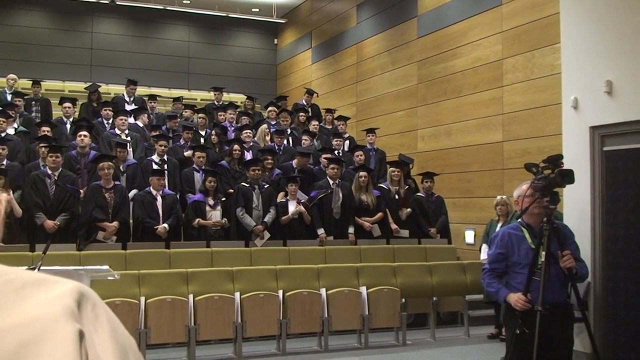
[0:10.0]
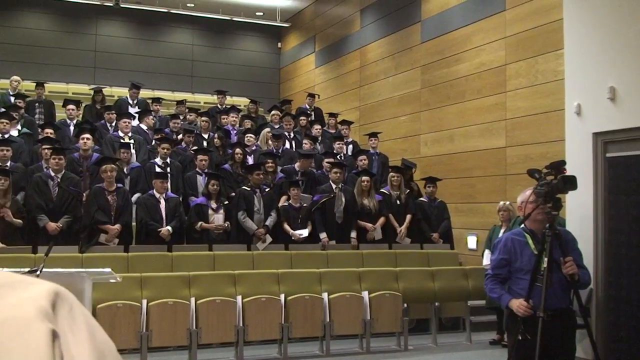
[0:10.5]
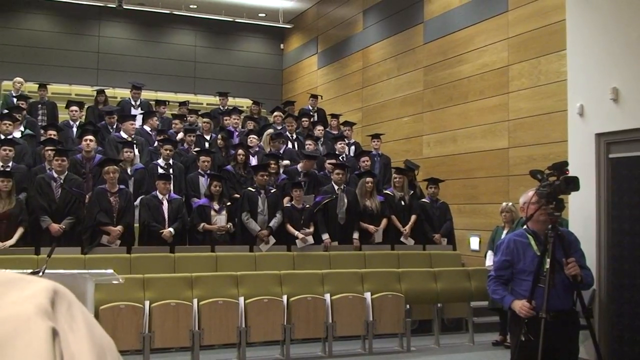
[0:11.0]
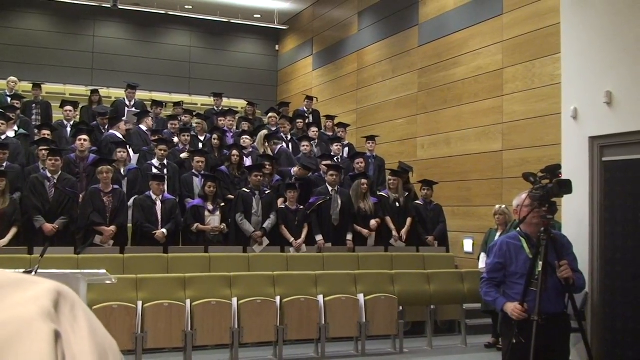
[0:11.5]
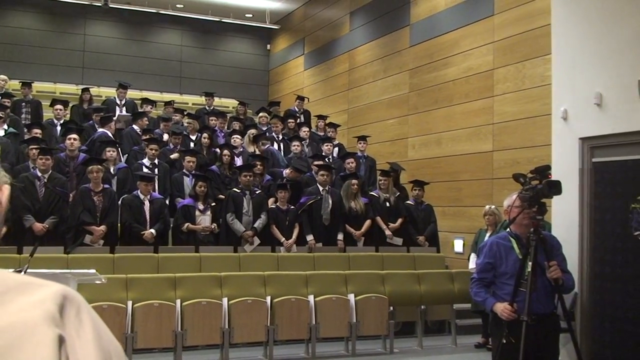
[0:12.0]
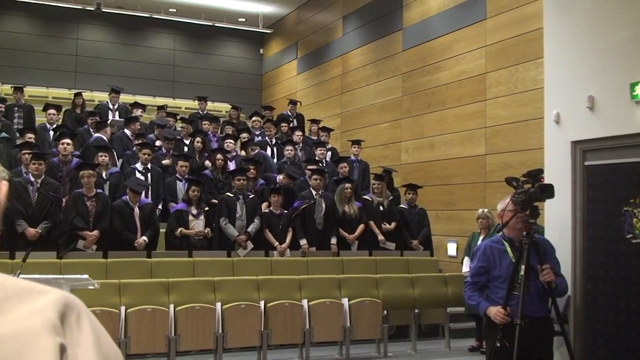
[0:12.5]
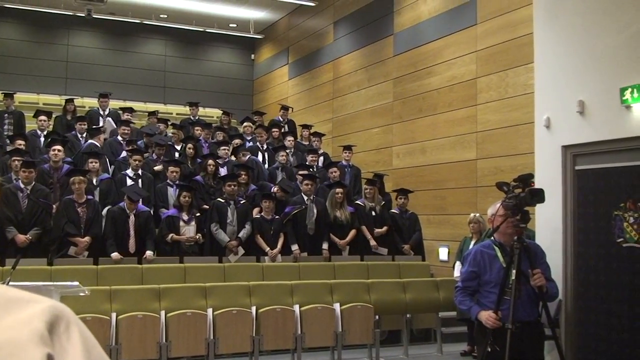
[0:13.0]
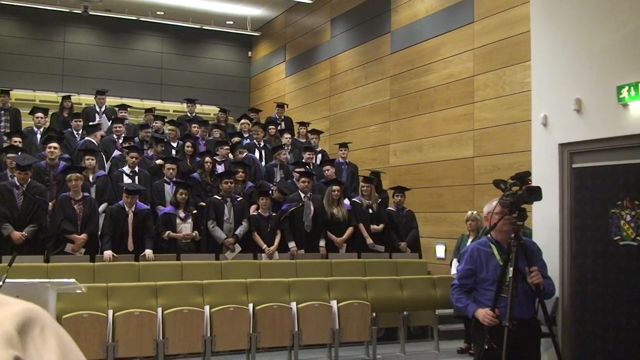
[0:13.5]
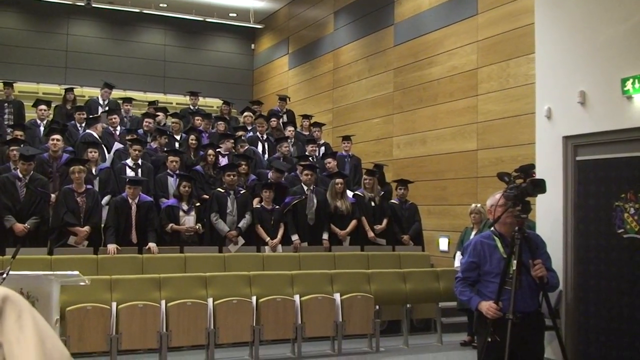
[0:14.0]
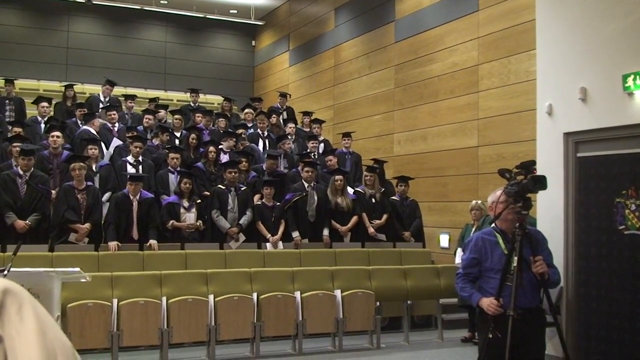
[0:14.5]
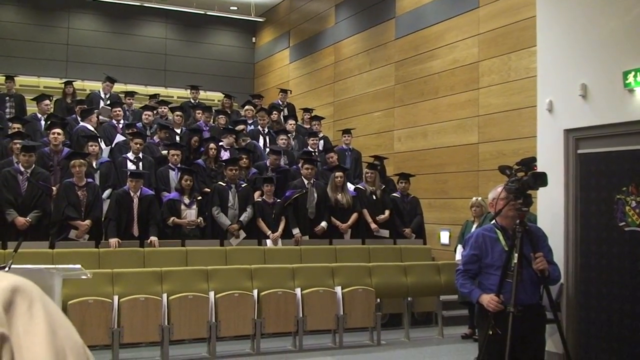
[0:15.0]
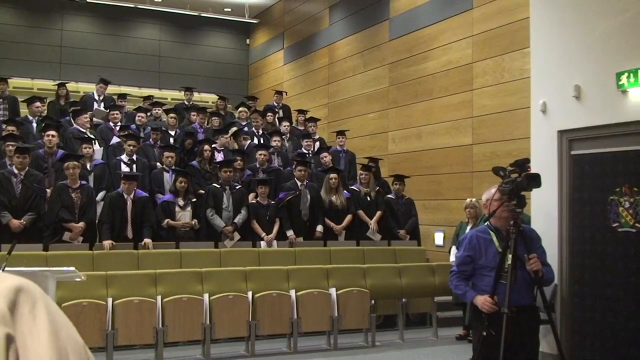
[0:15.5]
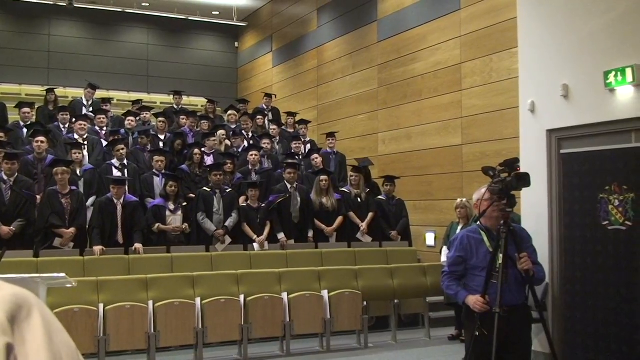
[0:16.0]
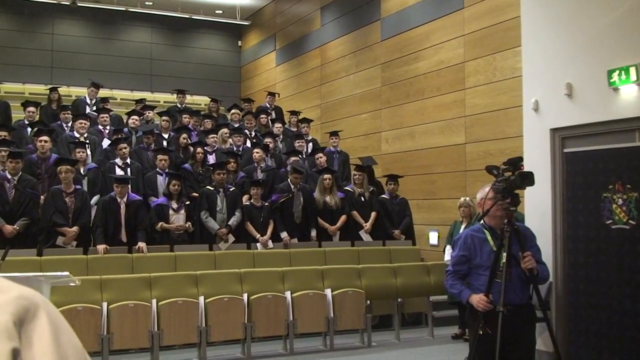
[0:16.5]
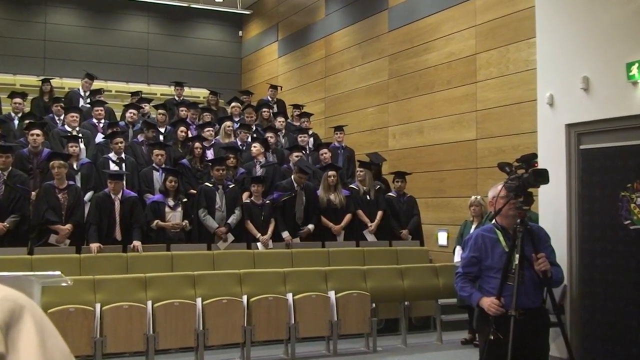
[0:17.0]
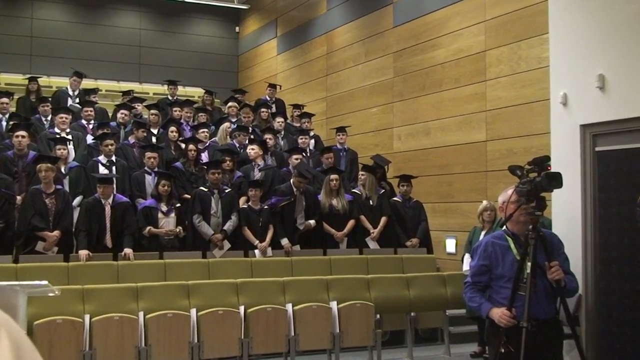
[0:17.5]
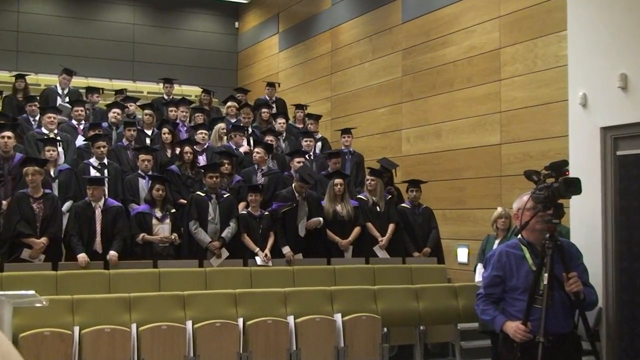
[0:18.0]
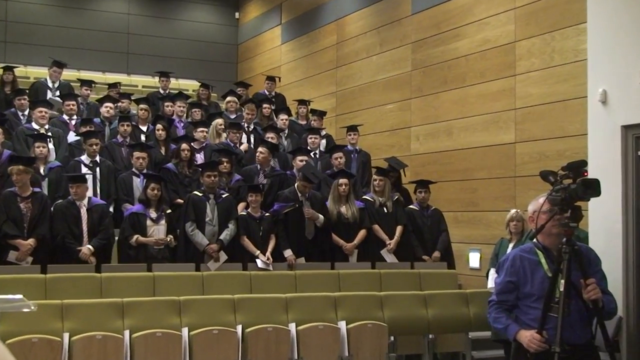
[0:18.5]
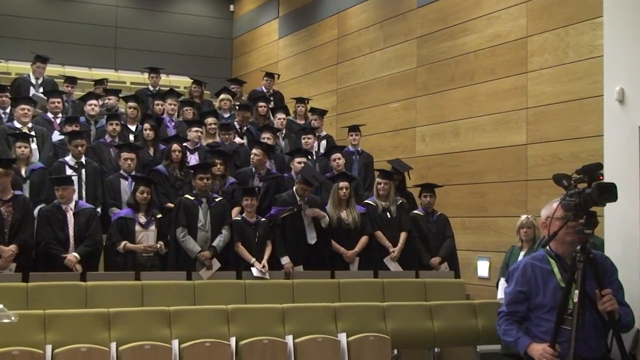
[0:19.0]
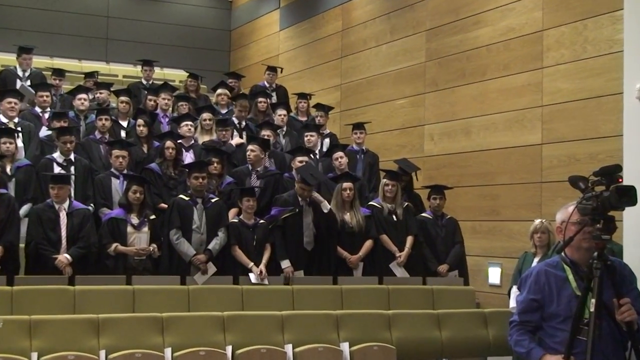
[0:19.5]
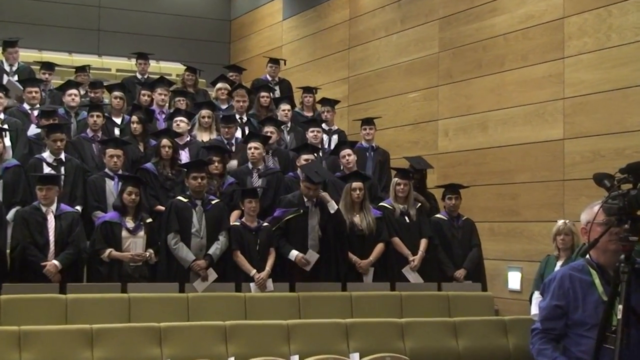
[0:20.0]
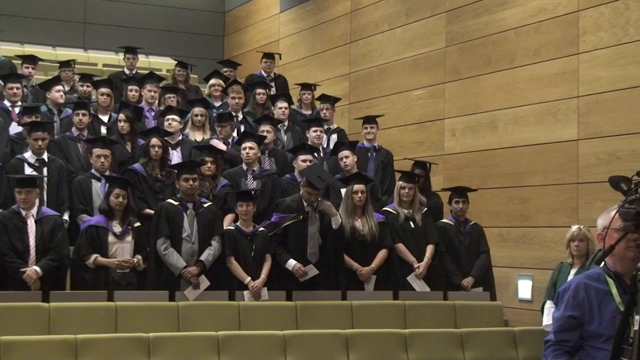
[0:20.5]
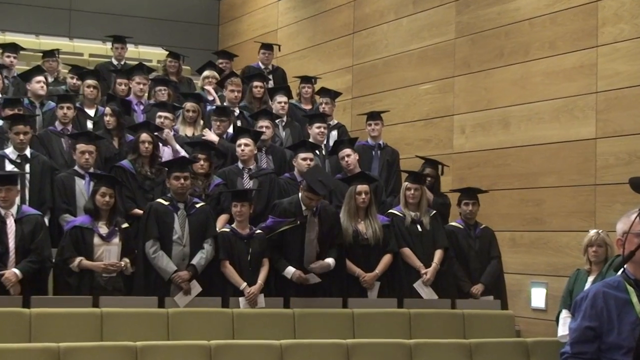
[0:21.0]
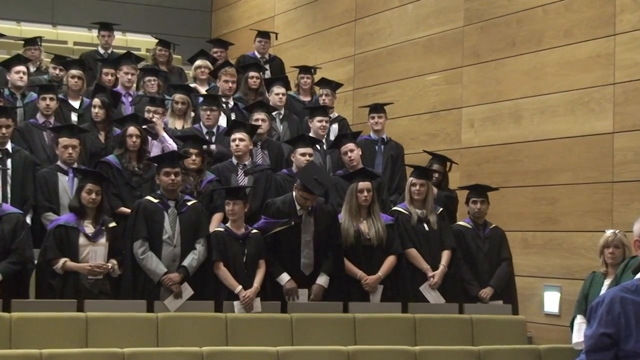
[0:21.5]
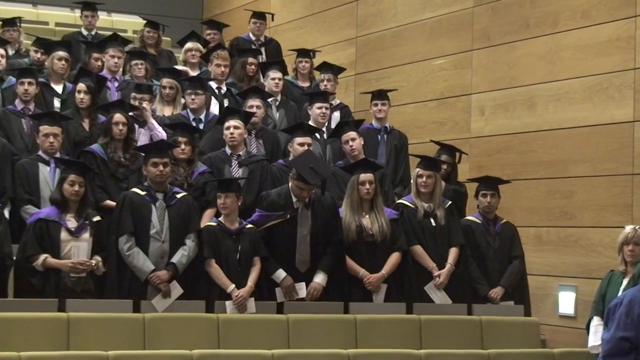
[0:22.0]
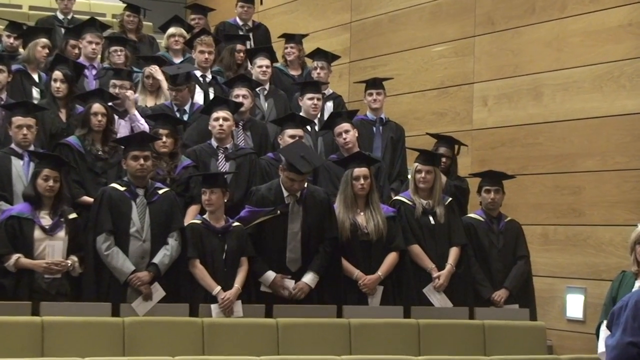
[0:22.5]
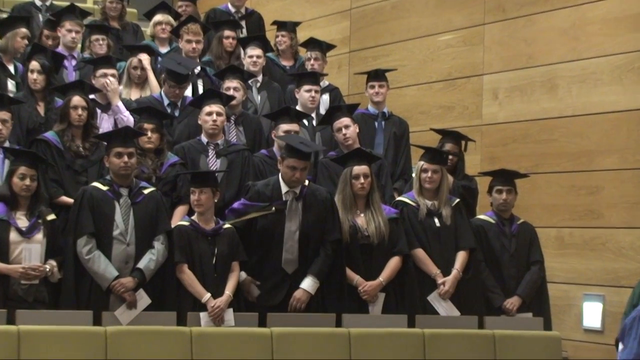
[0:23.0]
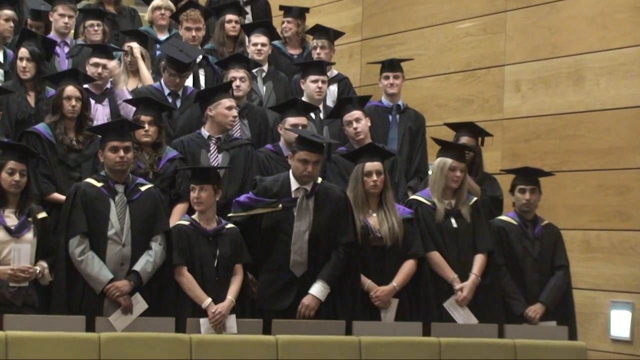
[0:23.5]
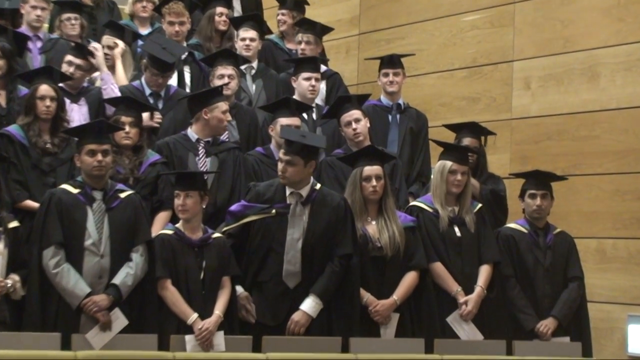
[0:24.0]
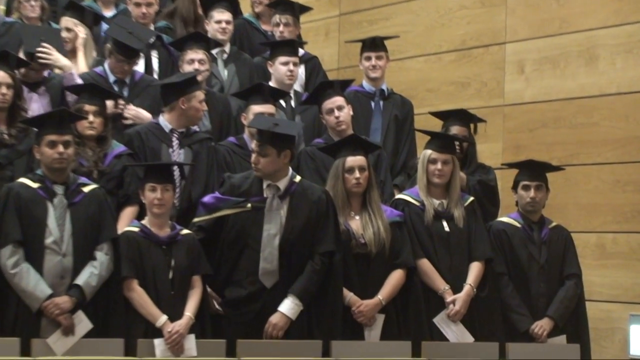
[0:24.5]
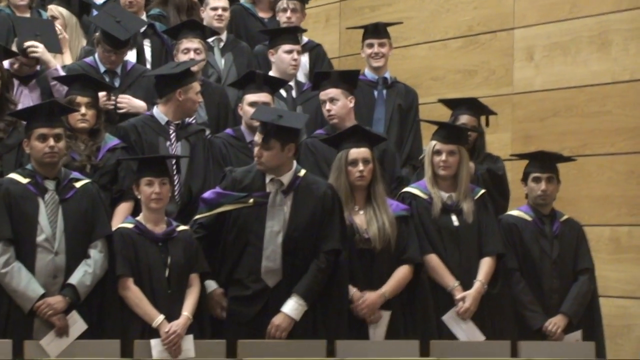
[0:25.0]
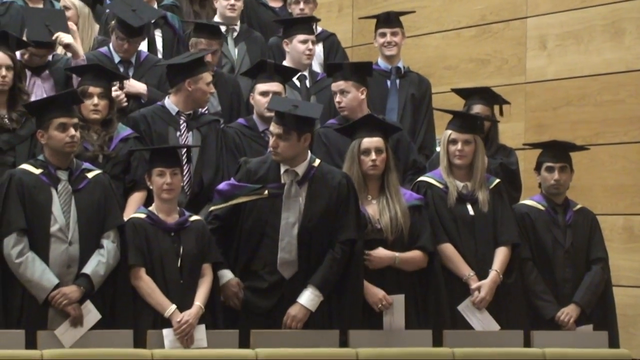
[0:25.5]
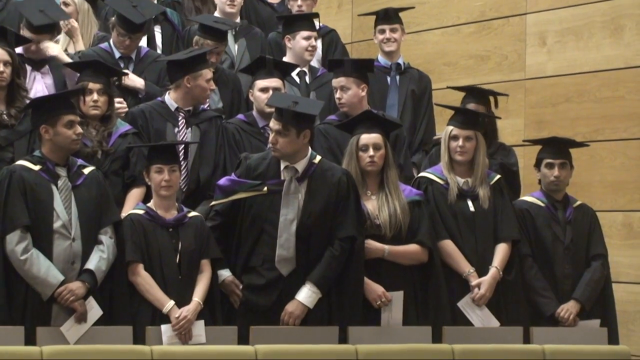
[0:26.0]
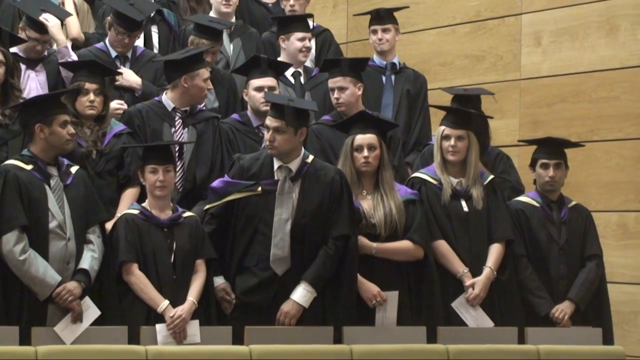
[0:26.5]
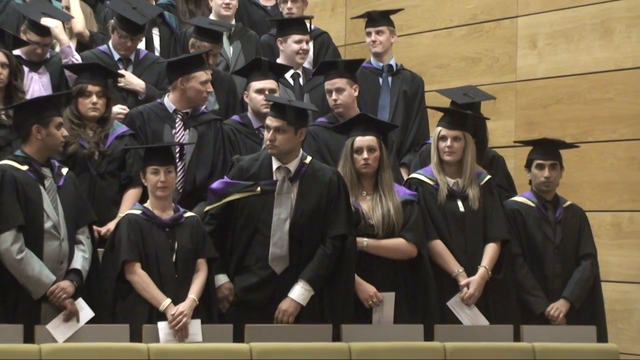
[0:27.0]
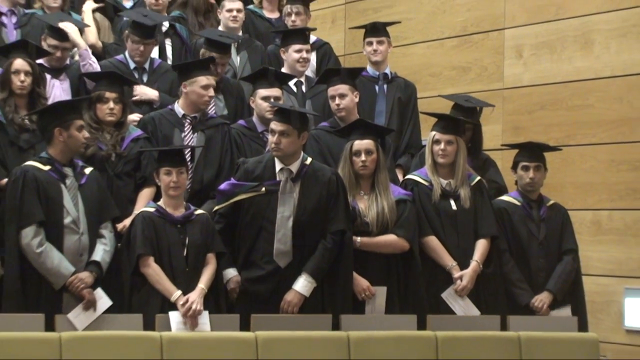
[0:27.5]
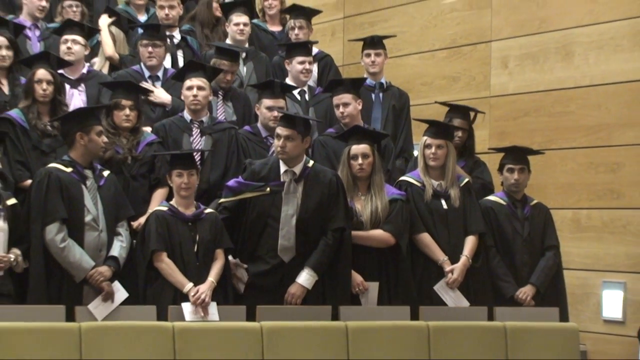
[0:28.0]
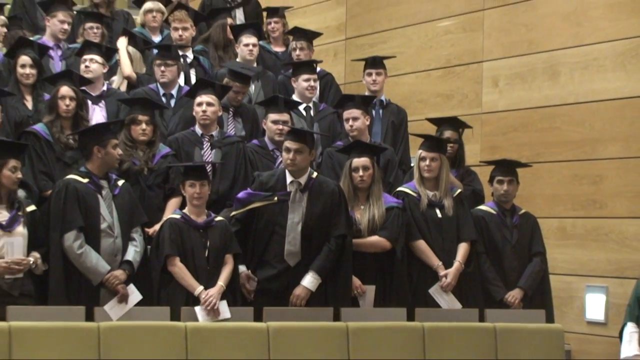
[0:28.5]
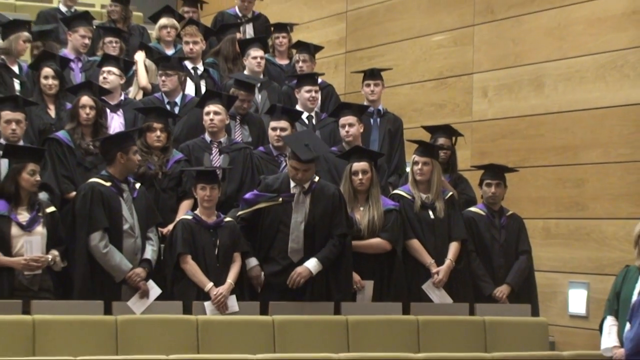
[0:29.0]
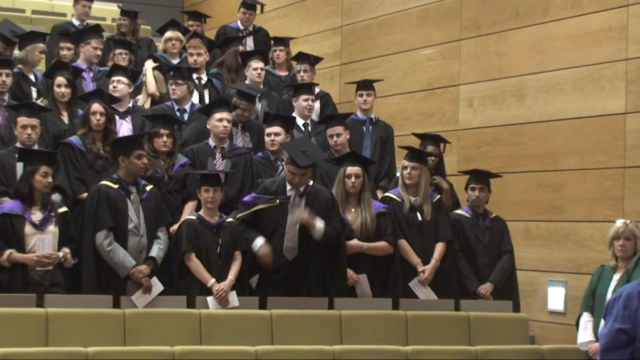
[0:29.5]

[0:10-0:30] The graduates mill about, seemingly nervously. Multiple ethnicities are represented, including several people who look like they are from India, though most of the people are white. The majority appear to be male, and there are some women among them. Most seem to have some sort of black clothing in addition to the robe, and some robes have an open front through which clothing is visible. Almost everyone is wearing black or purple, possibly the school colors. Someone partly obstructs the view on the left; only the corner of their shoulder is visible as they stand off to the corner. The auditorium has three rows of seats, and the graduates start on the fourth row. There appear to be six rows of graduates, possibly seven, with maybe about 10 across, perhaps a few more. The camera zooms in on a group of graduates. Several women with long hair are on the right, and there are several men who look like they are from India, one on the left and one on the right. An older woman, maybe about 40, wears pearl earrings and what looks like a black dress, along with a purple and yellow stole. Several rows of younger-looking people are smiling at the camera and talking to the people next to them. A woman on the left has long brown hair.